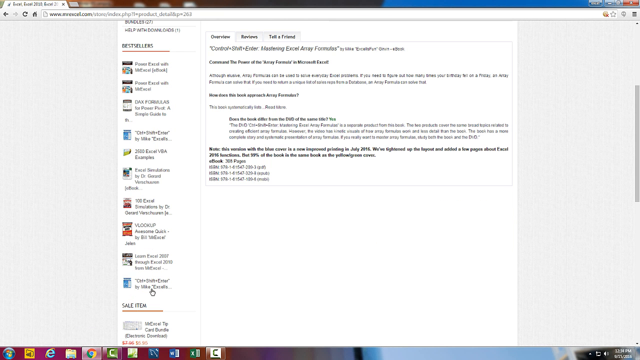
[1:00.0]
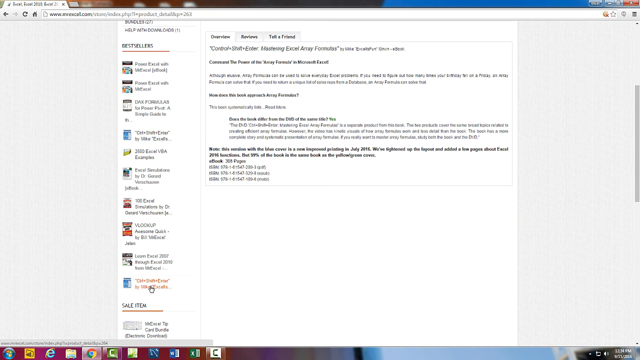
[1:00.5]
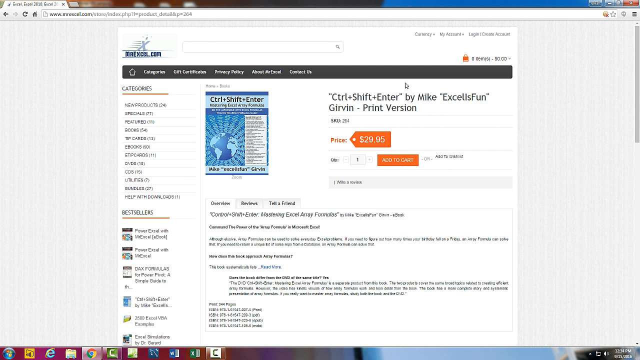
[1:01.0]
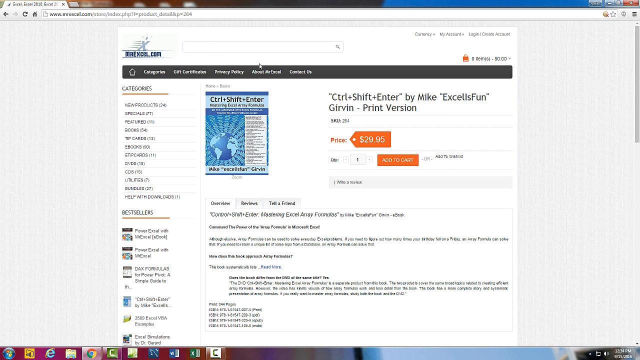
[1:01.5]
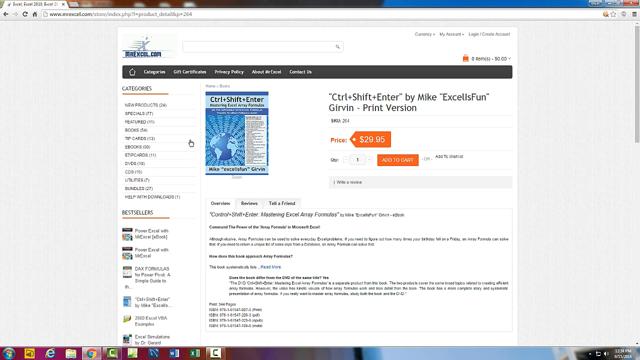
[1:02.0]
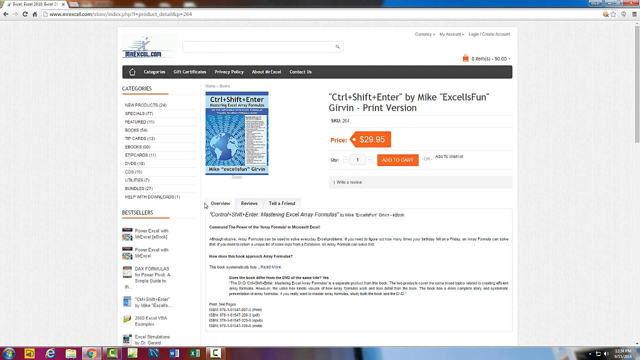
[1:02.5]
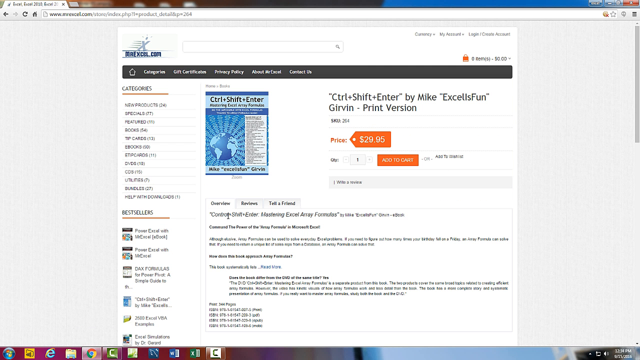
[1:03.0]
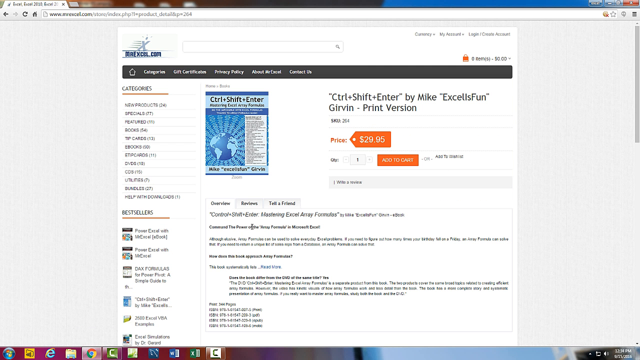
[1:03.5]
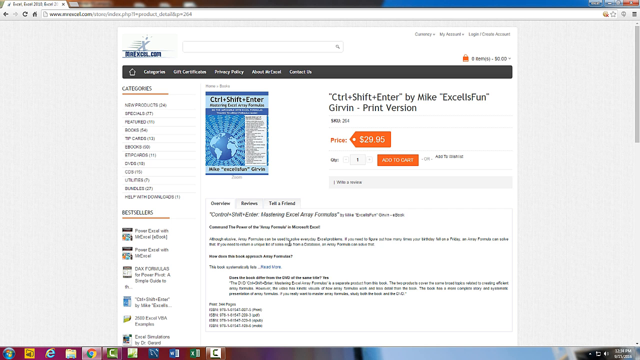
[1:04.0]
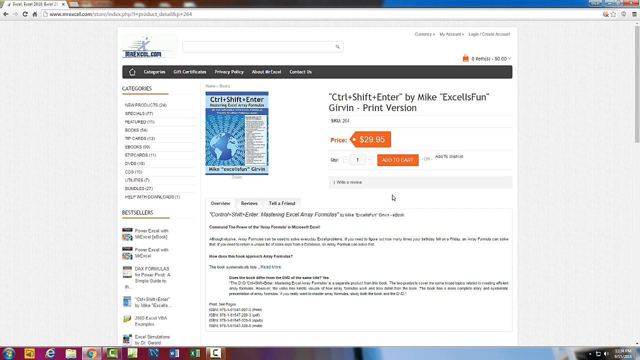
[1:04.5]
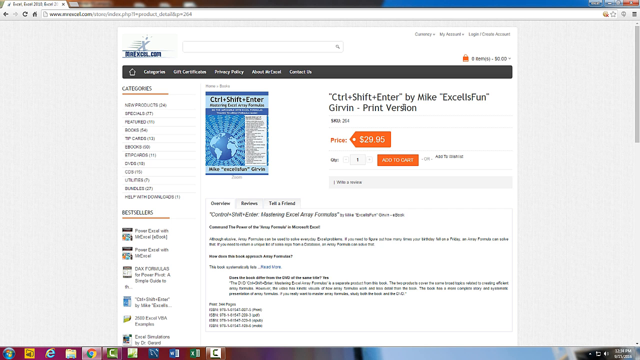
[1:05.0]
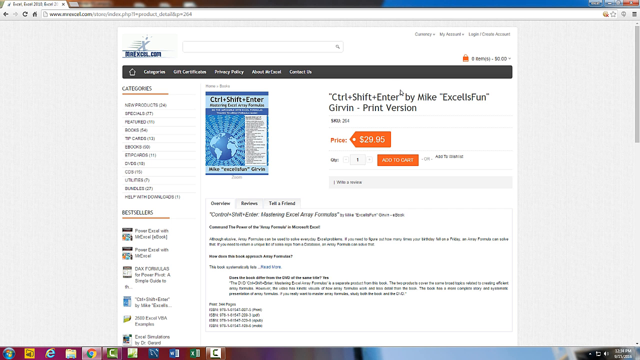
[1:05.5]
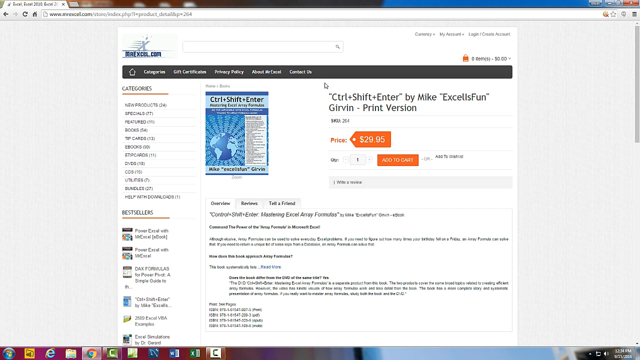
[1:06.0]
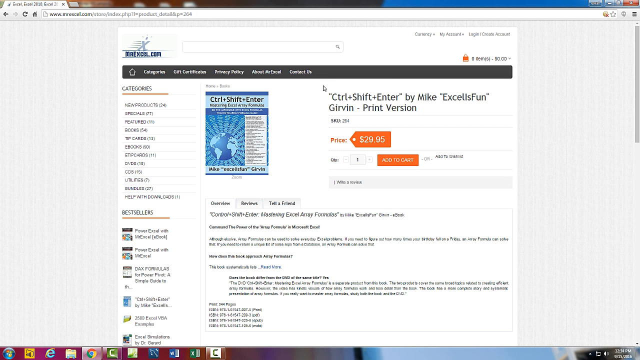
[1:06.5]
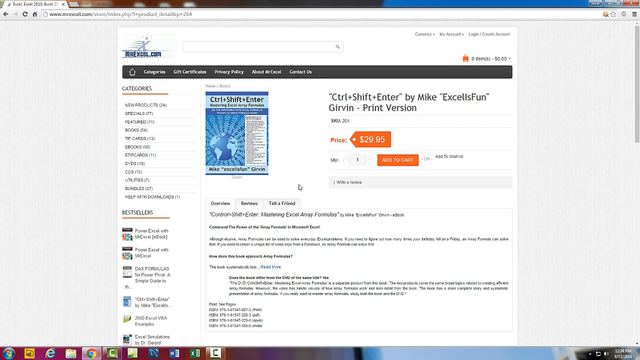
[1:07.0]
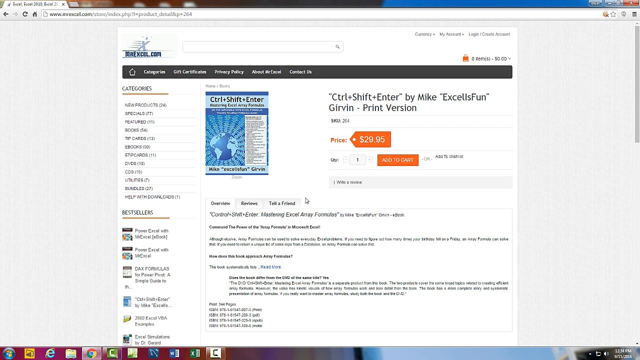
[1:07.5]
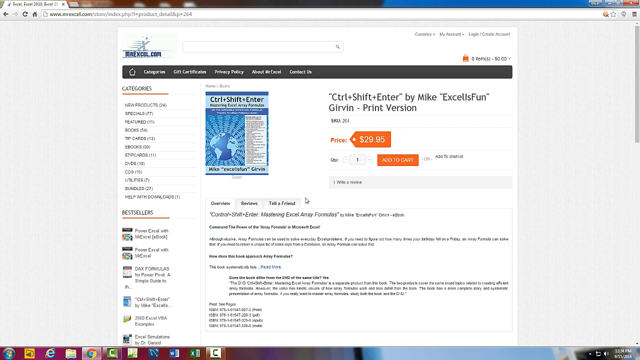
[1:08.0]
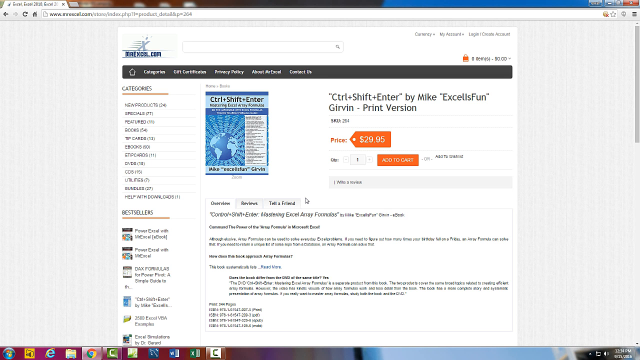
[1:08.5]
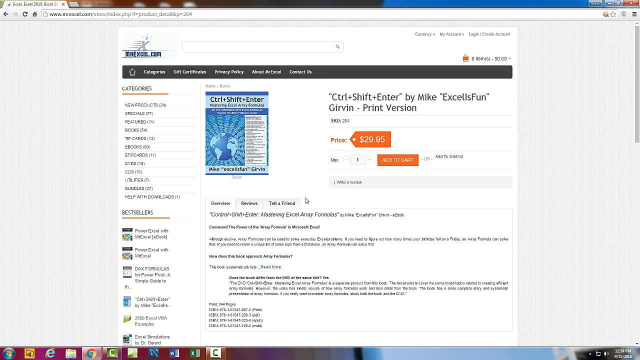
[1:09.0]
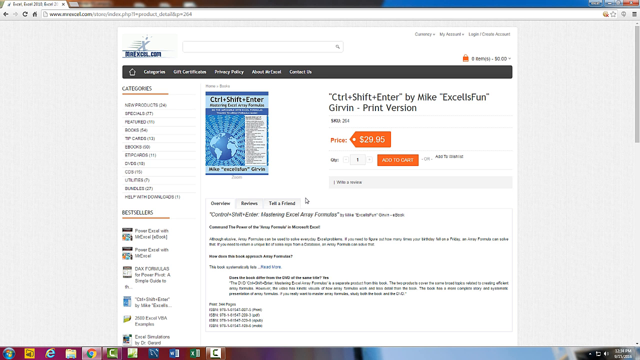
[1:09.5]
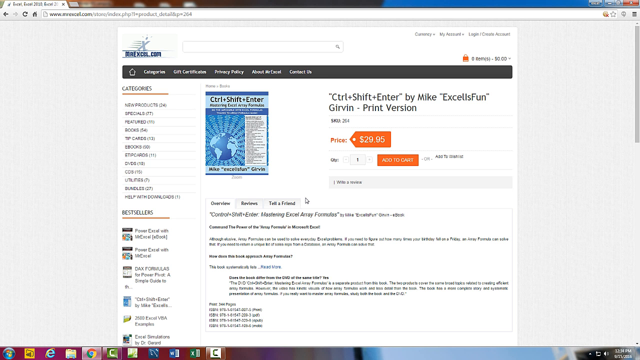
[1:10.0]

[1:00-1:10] Someone is recording their computer screen, with a web browser open to the MrExcel.com web page. The product listing has been scrolled all the way down to show just the overview of the product, the eBook for Control plus Shift plus Enter Mastering Excel Array Formulas by Mike Girvin. The user then navigates to the left column, where multiple other listings appear under the Best Sellers header, and clicks on a book titled Control plus Shift plus Enter by Mike Excel's fun Girvin print version. The mouse cursor circles multiple times around the cover, which is blue with the same title on it, and then circles multiple times around the rest of the product description, as if emphasizing it.